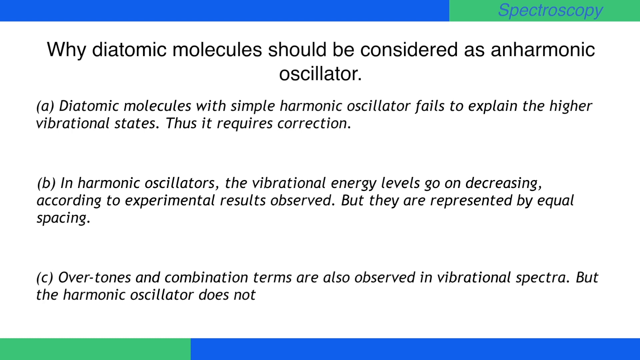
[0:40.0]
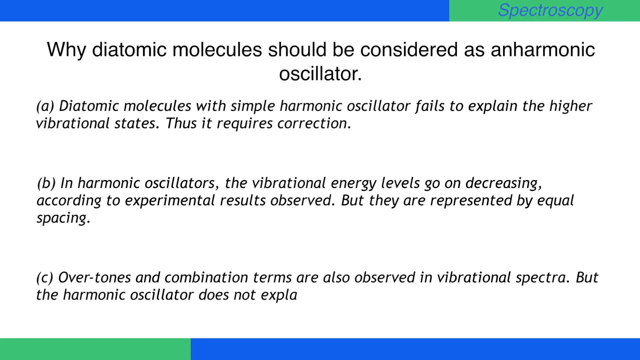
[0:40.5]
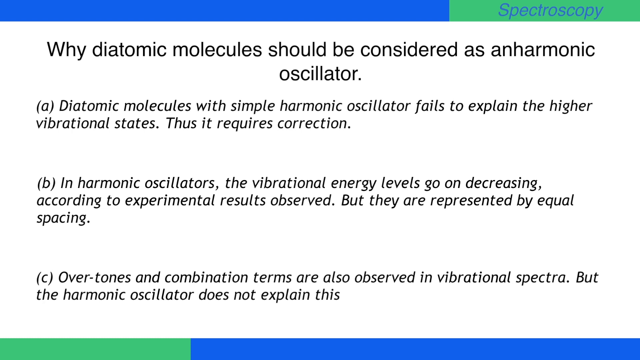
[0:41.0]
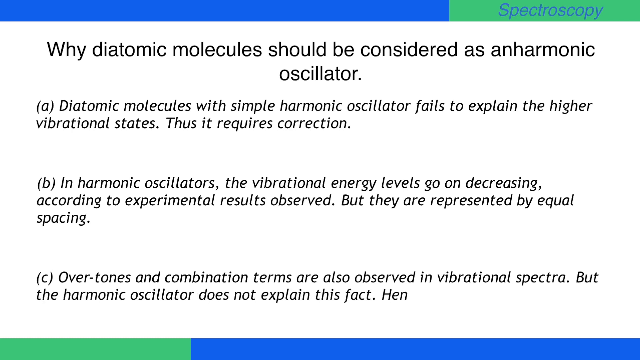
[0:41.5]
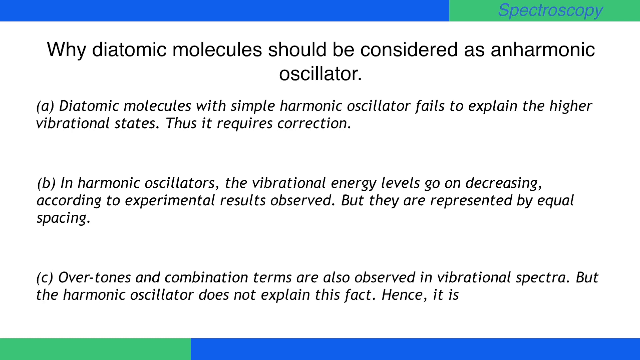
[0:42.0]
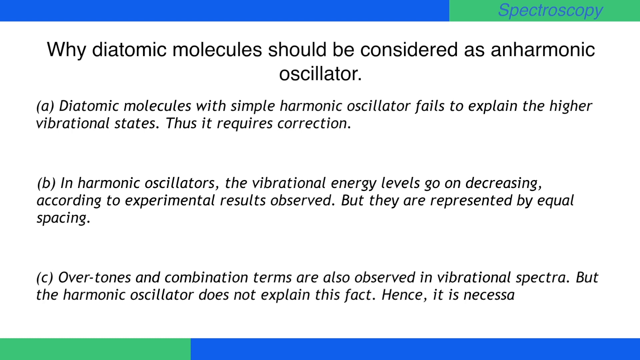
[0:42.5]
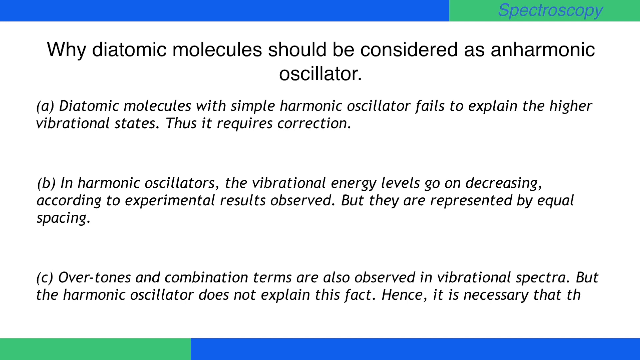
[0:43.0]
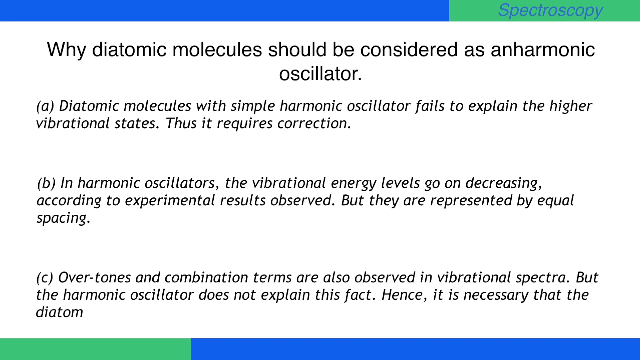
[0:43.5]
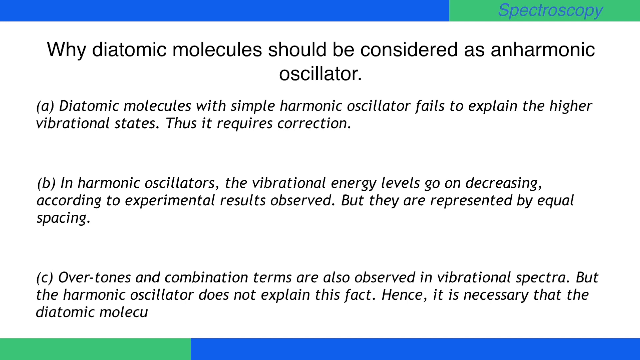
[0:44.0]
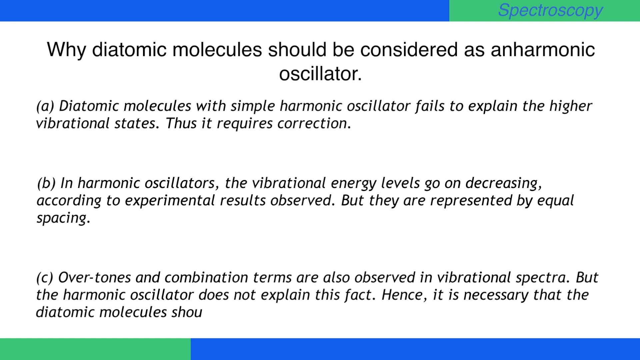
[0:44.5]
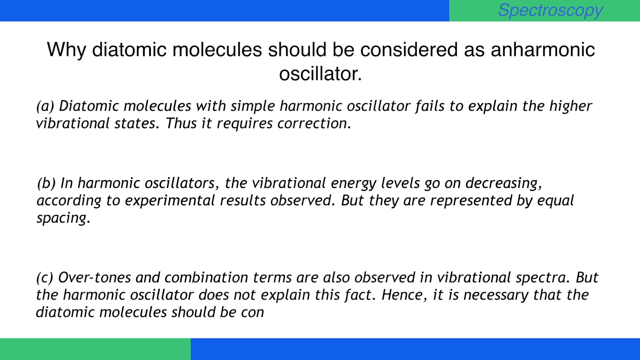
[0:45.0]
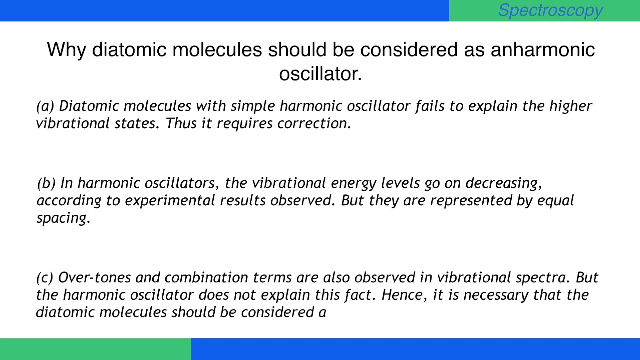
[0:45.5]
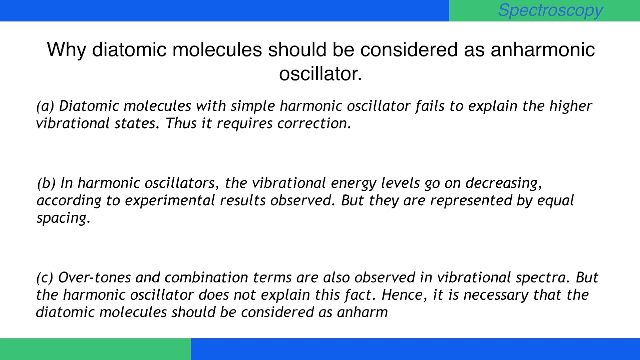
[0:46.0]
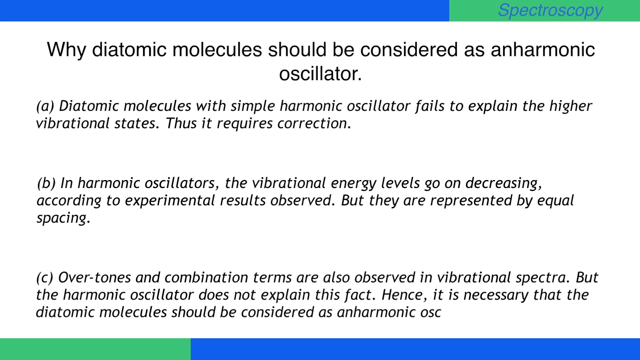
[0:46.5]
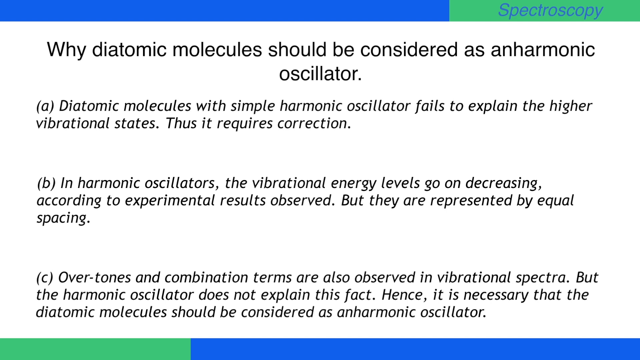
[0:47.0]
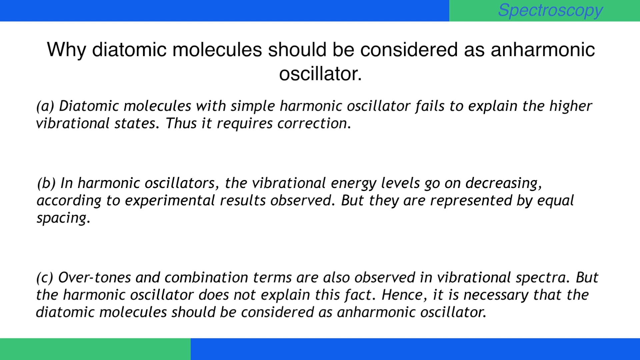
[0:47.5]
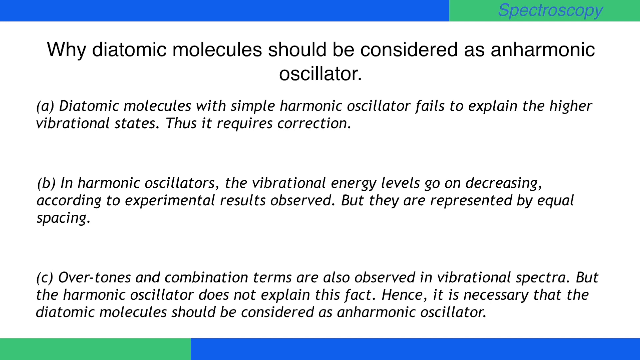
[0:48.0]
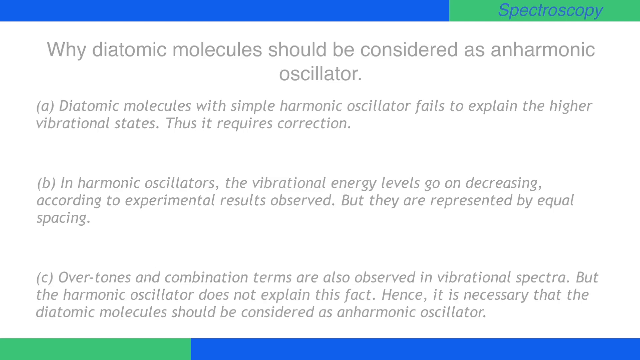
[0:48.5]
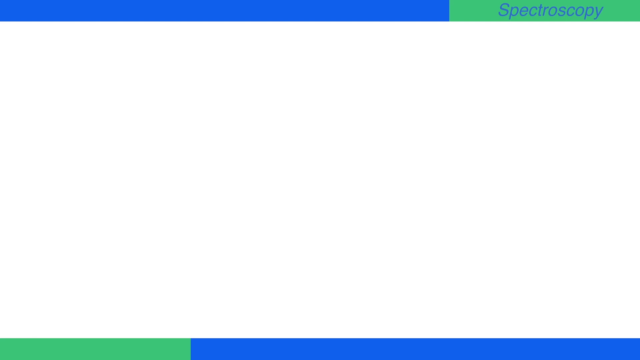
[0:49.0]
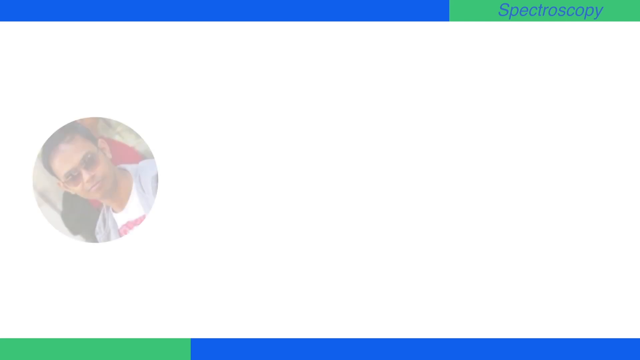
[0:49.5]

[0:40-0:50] The final sentence, labeled C, continues typing out until it is almost done, and the full sentence reads "overtones and combination terms are also observed in vibrational spectra. But the harmonic oscillator does not explain this fact, hence it is necessary that the diatomic molecules should be considered as anharmonic oscillator." The headline is in a normal typeface and slightly larger than the rest of the text, while the three points labeled A, B and C are in a smaller font and in italics.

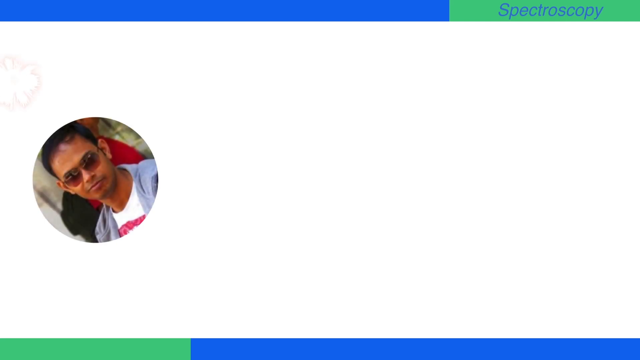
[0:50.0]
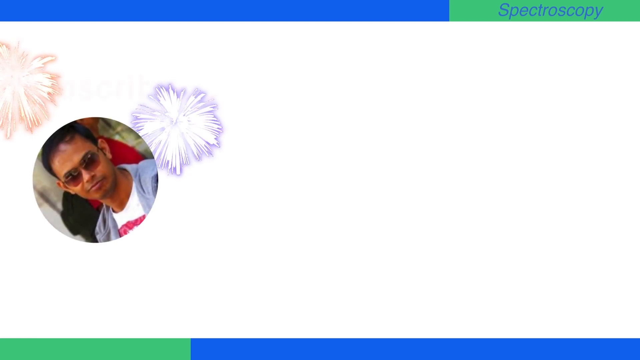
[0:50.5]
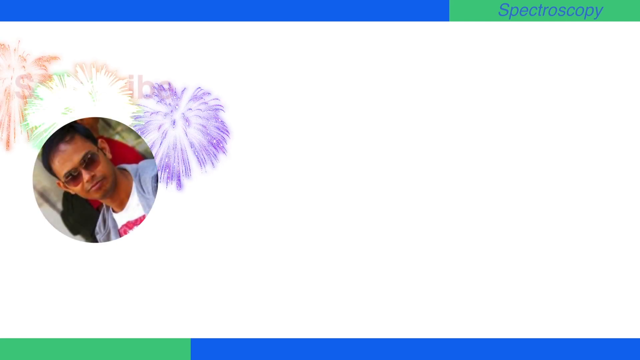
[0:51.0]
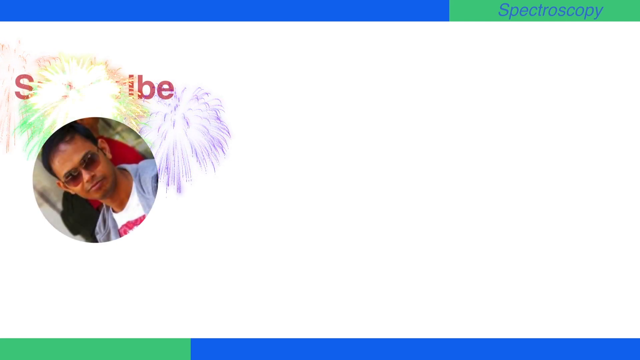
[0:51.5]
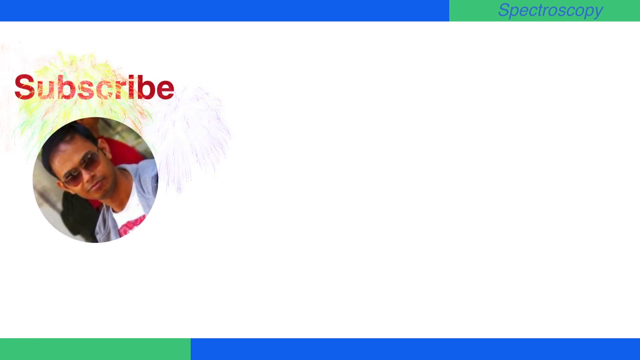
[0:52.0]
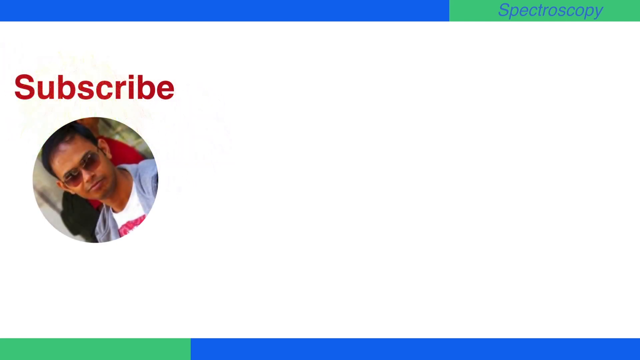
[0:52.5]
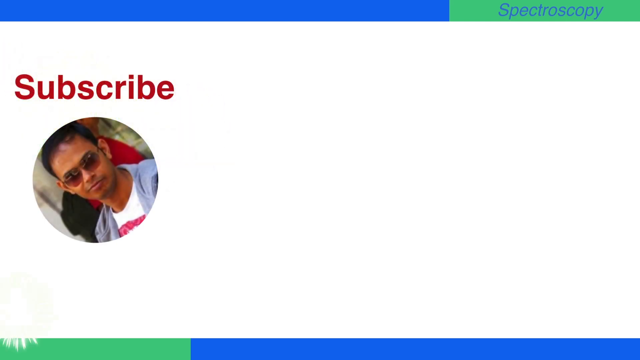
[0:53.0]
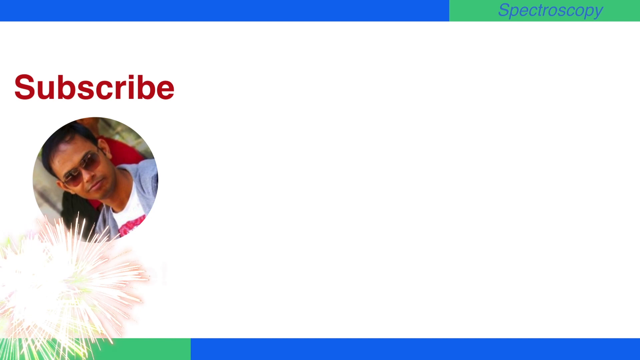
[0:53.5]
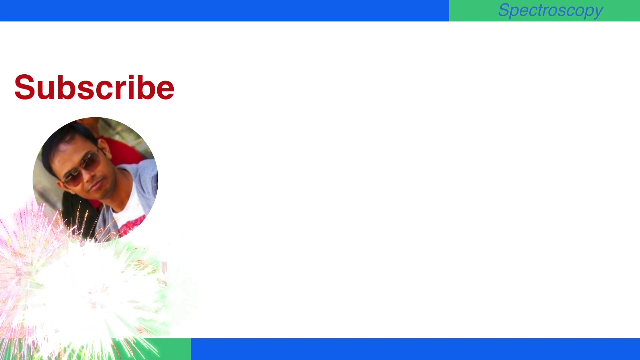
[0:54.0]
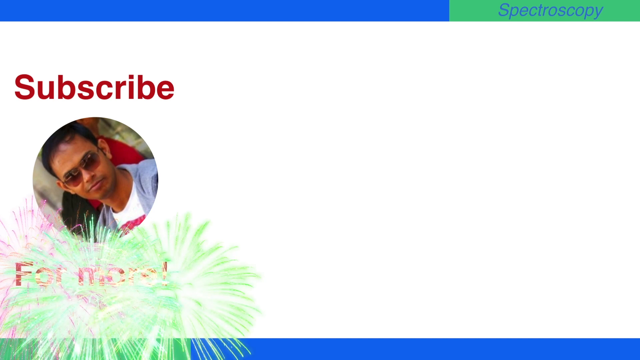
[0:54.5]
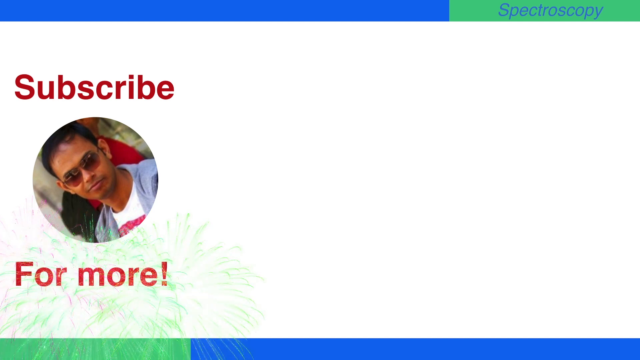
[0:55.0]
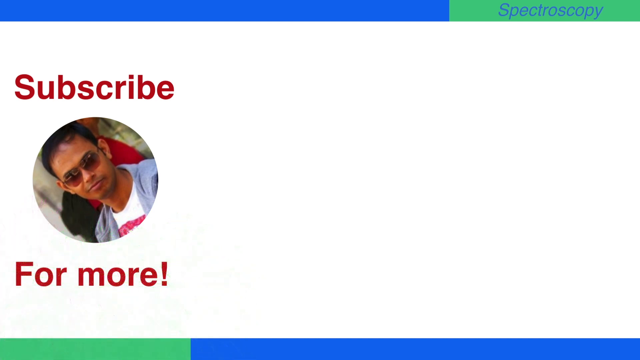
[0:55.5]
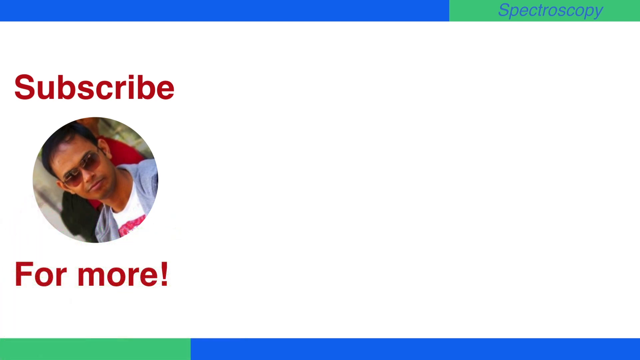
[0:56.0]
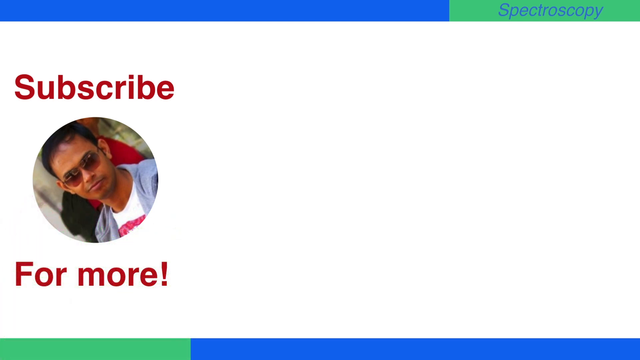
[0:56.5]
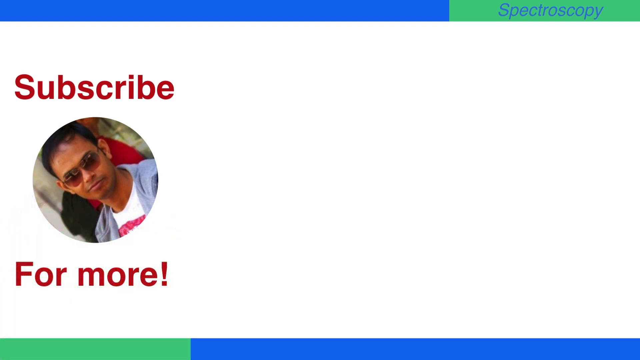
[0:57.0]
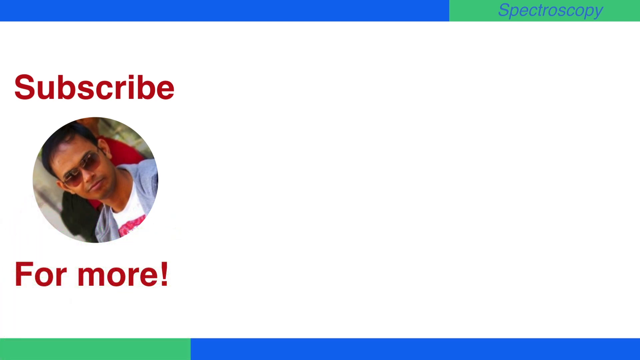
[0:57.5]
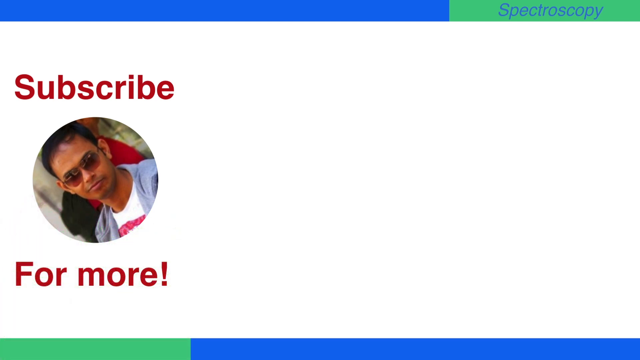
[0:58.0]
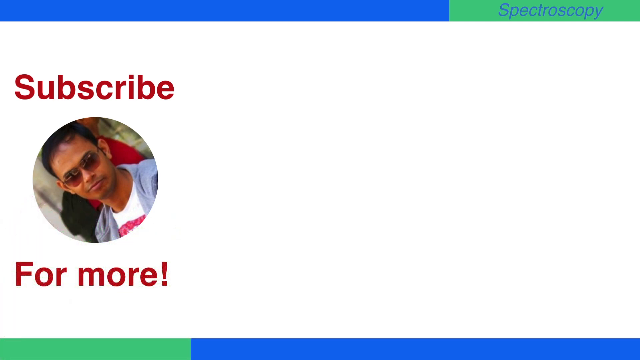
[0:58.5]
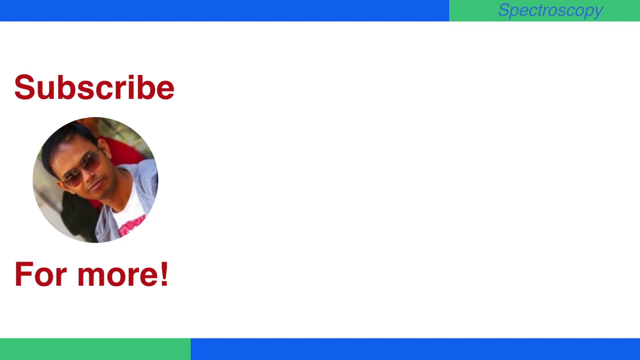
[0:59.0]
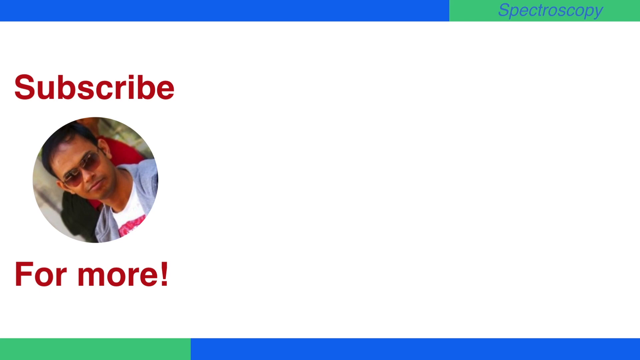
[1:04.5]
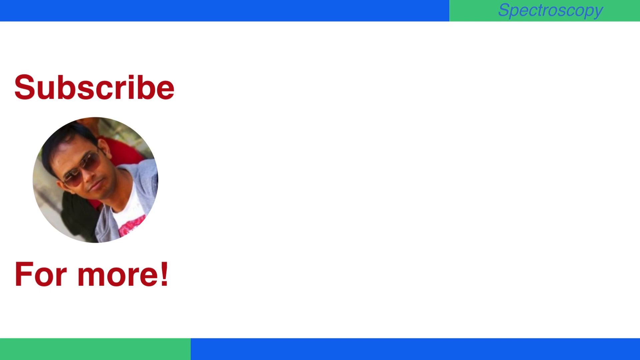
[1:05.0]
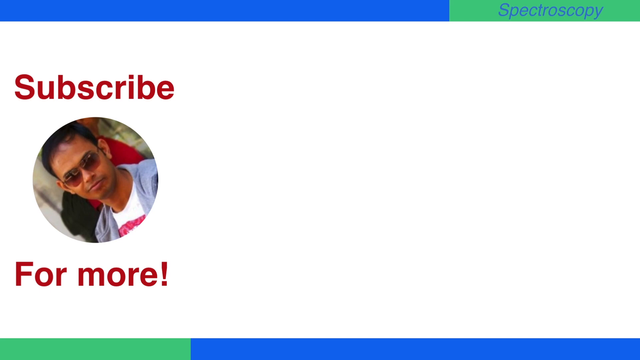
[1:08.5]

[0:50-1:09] A photograph of a man appears on the left of the screen. He wears sunglasses and has black hair, and the photograph is rotated 45 degrees to the left and cropped as a circle. Bursts of color go off behind him, looking like orange, purple and green fireworks explosions behind the photo. These firework illustrations give way to the word "subscribe" in red letters. More firework explosions go off in the lower left of the screen and give way to more red text, so that the full text reads "Subscribe for more," with "Subscribe" and "For" capitalized but not "more."